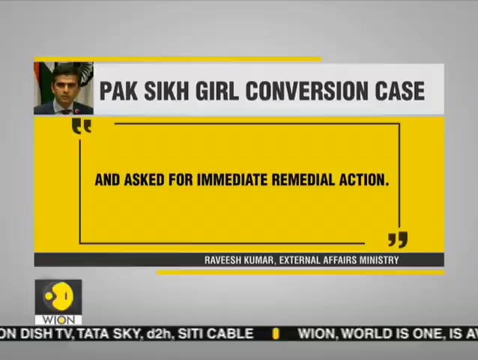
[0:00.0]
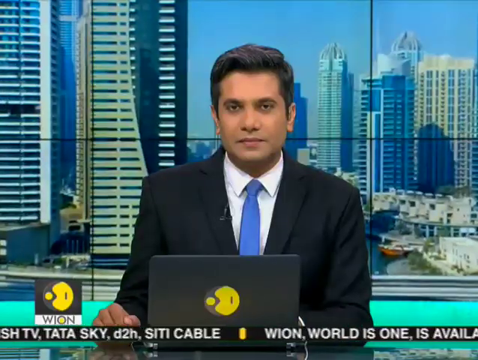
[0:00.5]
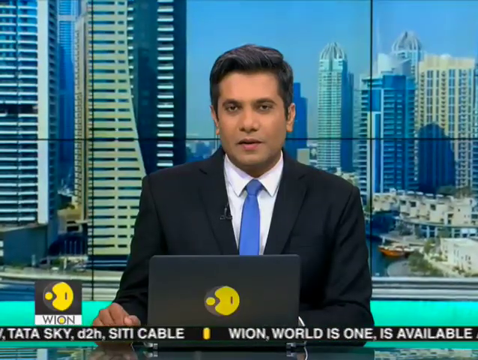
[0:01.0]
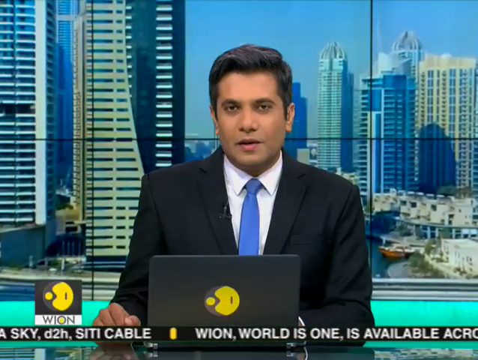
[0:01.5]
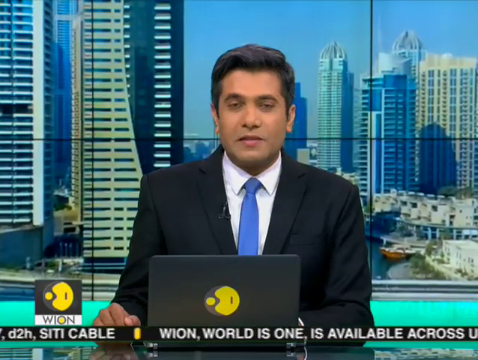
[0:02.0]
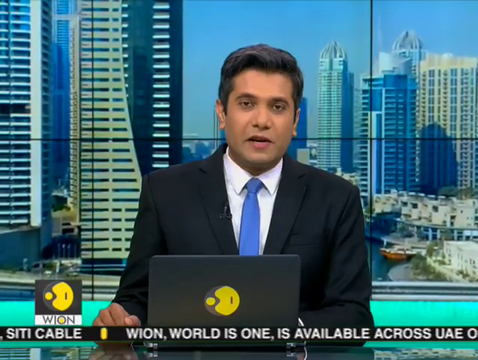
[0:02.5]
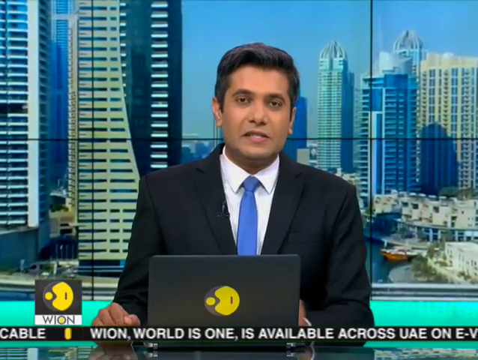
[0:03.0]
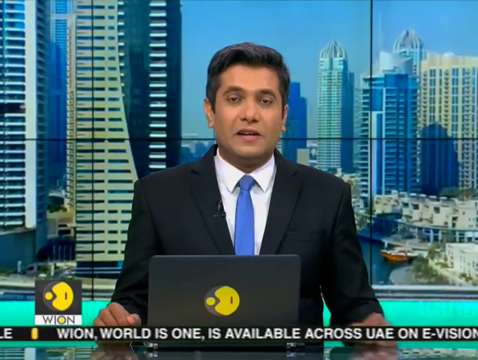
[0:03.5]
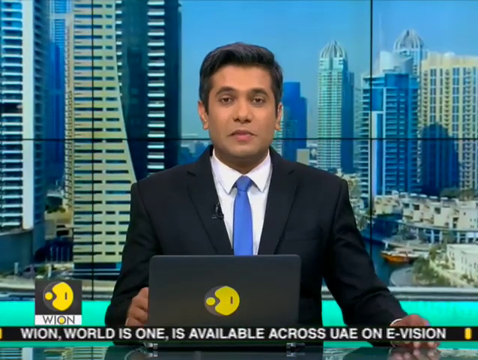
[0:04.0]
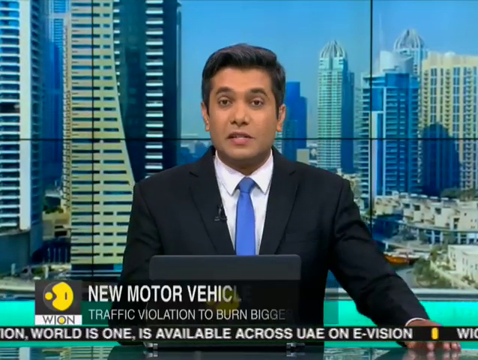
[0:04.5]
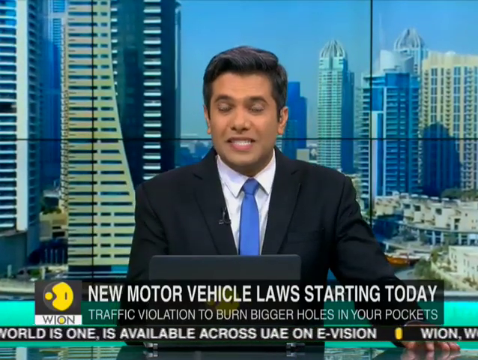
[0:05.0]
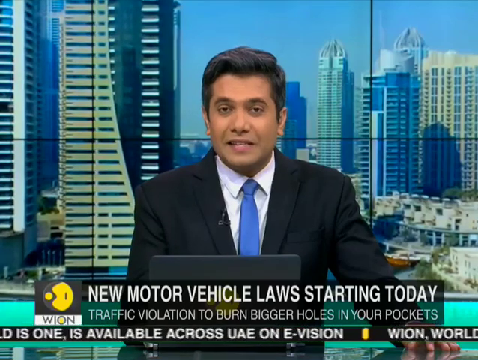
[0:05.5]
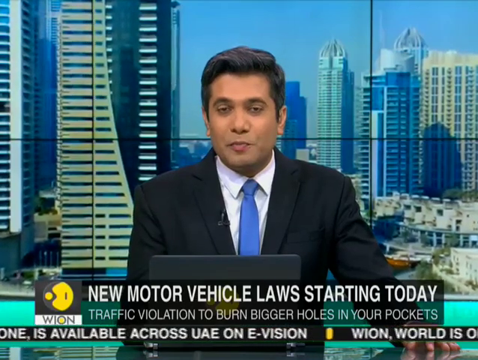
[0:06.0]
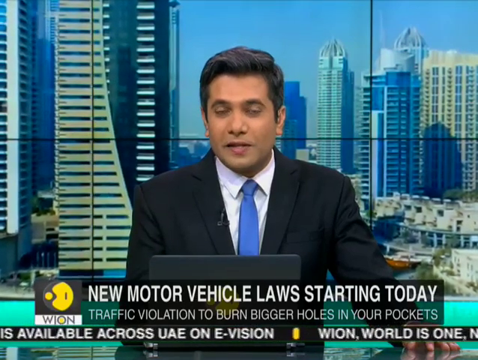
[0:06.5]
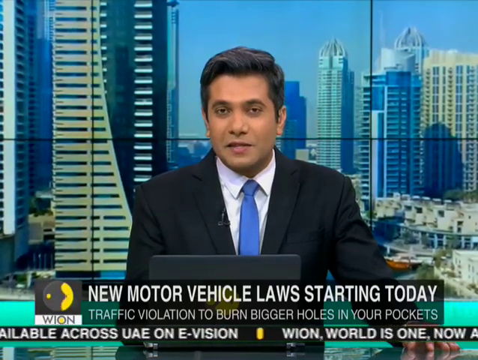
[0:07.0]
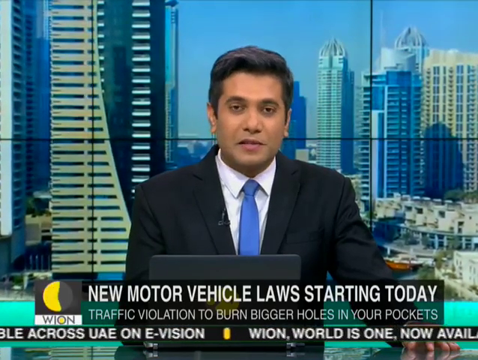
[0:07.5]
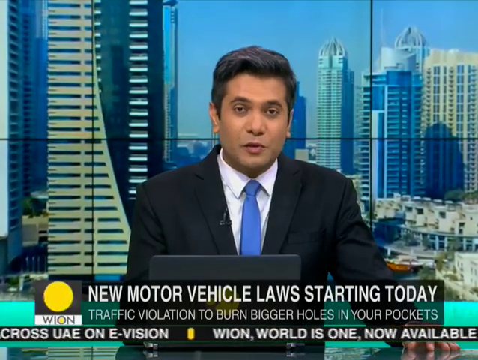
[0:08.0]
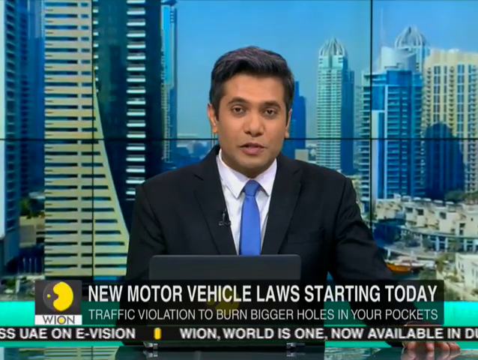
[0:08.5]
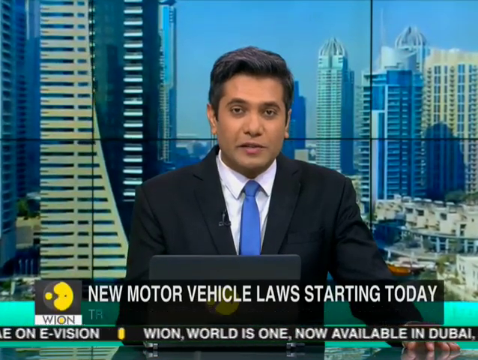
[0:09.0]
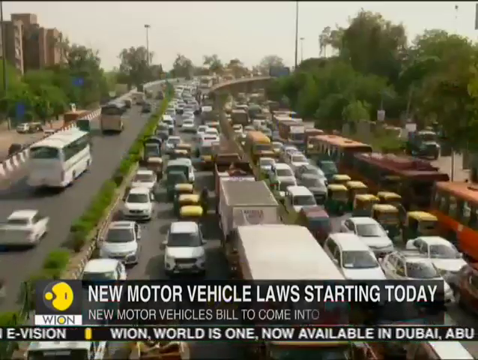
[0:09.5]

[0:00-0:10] A male news anchor sits at a desk with a laptop and speaks directly to the camera. Behind him, a large screen shows a city with skyscrapers, and a WeOn News Channel logo is visible at the bottom left of the screen. He wears a black suit, a white shirt and a blue tie, and his hands rest on the table. A lower-third graphic appears at the bottom of the screen with the headline "New Motor Vehicle Laws Starting Today" and the sub-headline "Traffic Violation to Burn Bigger Holes in Your Pockets." The anchor keeps speaking as he looks at the camera. The scene then changes to a wide aerial shot of a busy multi-lane highway filled with various vehicles, including cars, trucks and buses. A page with writing on a yellow poster pops up.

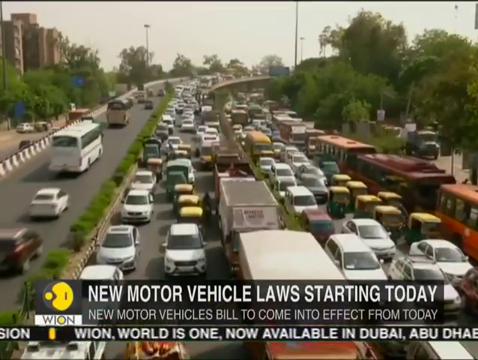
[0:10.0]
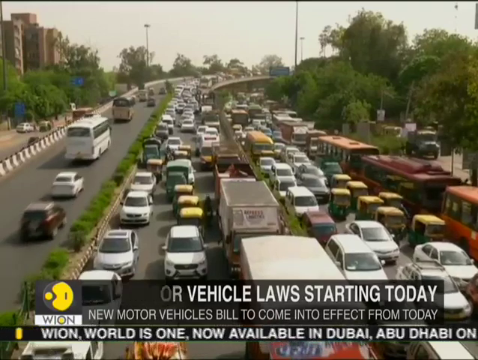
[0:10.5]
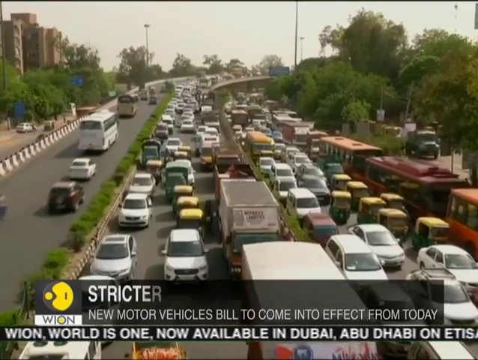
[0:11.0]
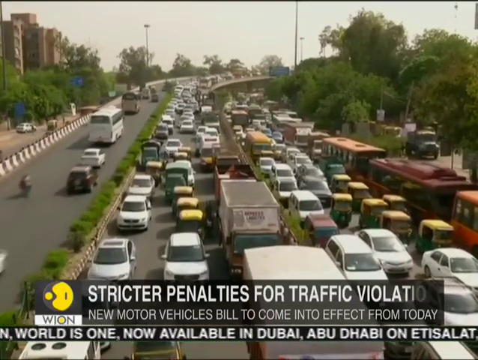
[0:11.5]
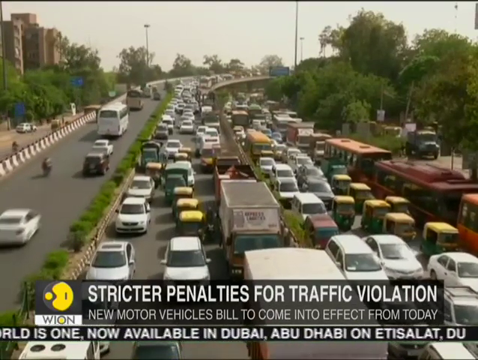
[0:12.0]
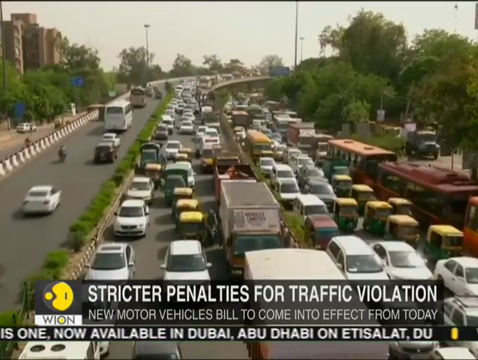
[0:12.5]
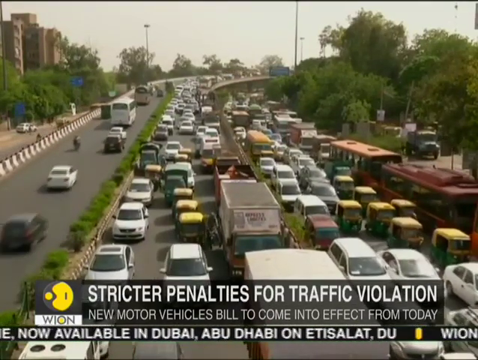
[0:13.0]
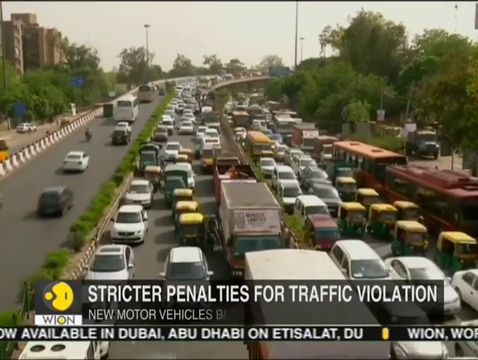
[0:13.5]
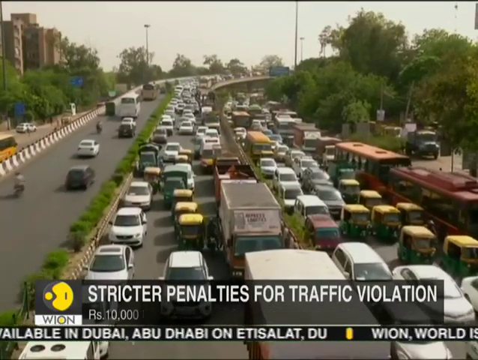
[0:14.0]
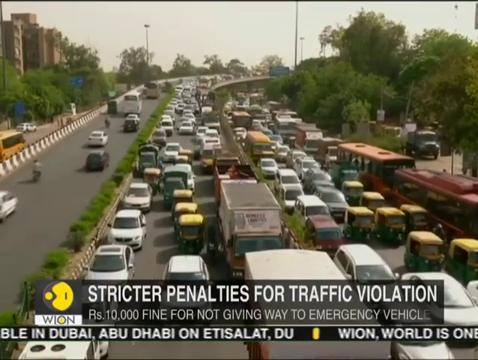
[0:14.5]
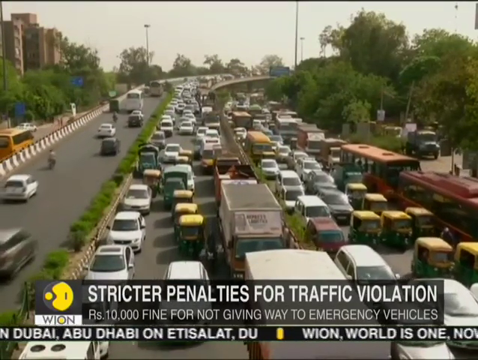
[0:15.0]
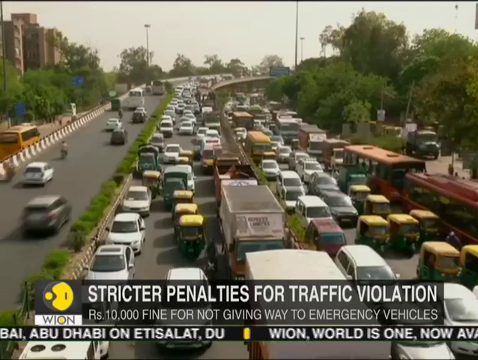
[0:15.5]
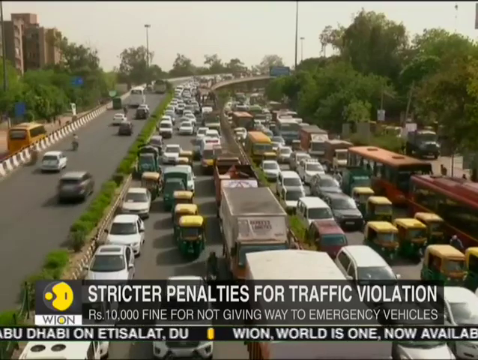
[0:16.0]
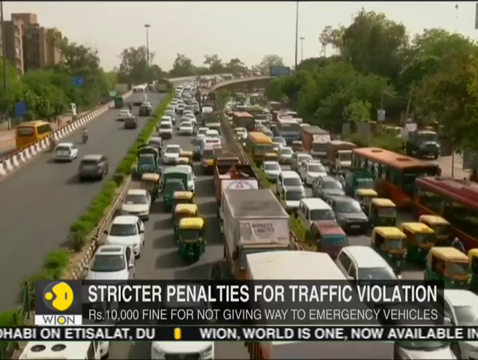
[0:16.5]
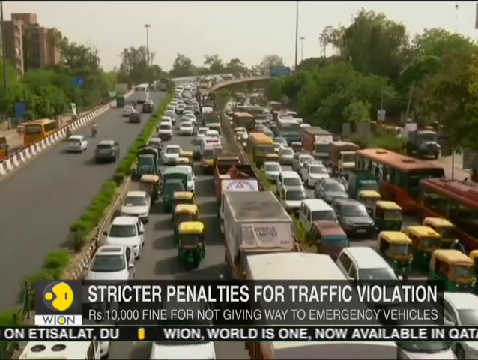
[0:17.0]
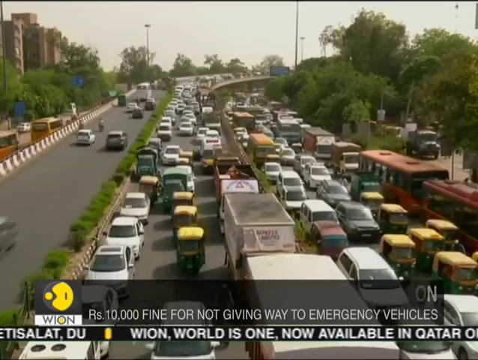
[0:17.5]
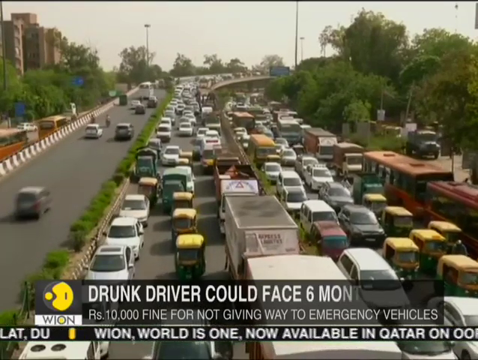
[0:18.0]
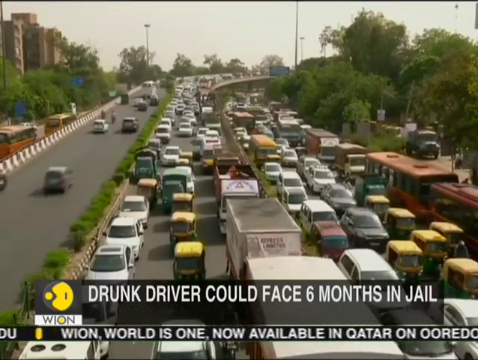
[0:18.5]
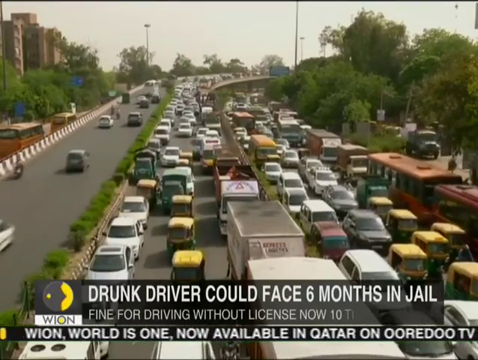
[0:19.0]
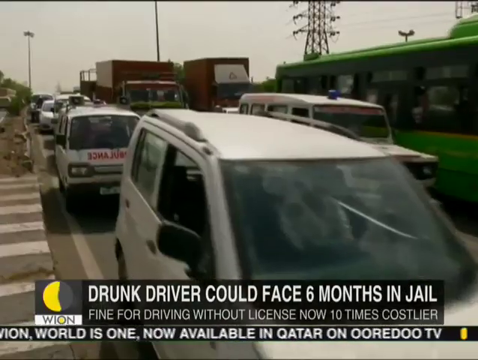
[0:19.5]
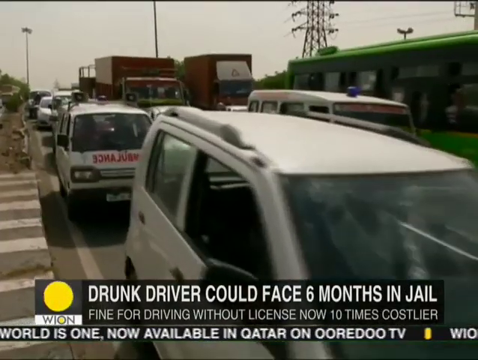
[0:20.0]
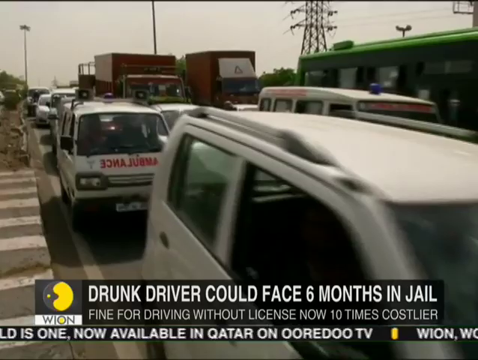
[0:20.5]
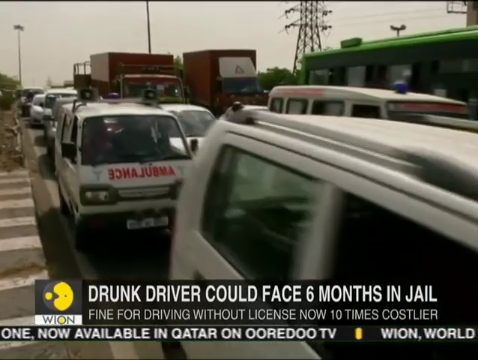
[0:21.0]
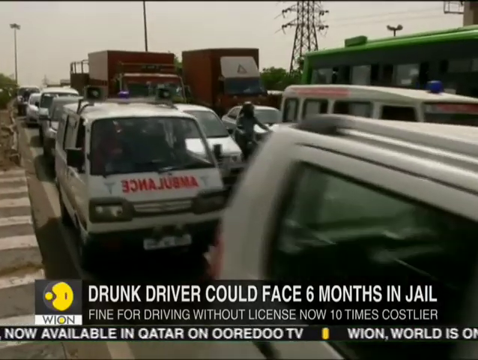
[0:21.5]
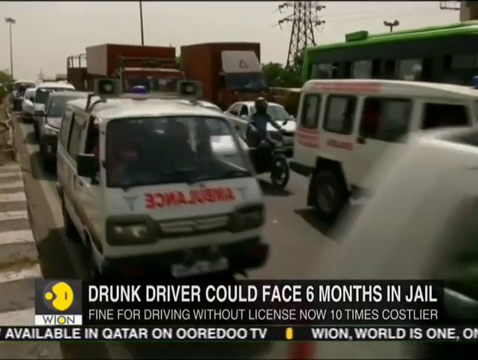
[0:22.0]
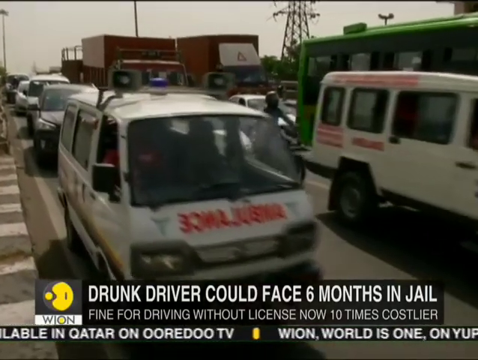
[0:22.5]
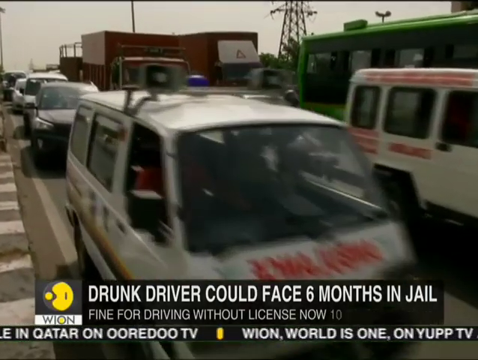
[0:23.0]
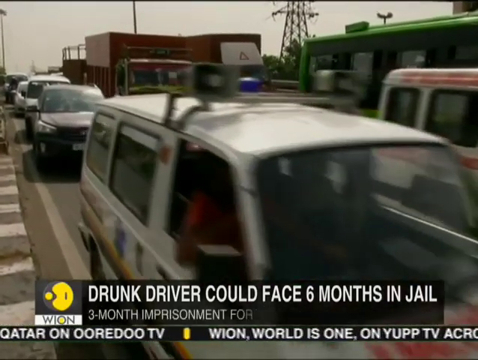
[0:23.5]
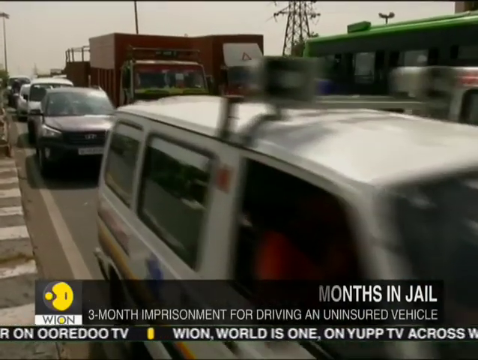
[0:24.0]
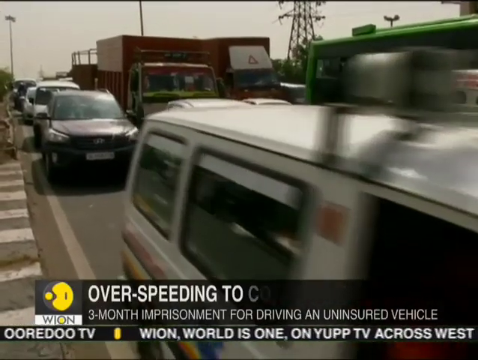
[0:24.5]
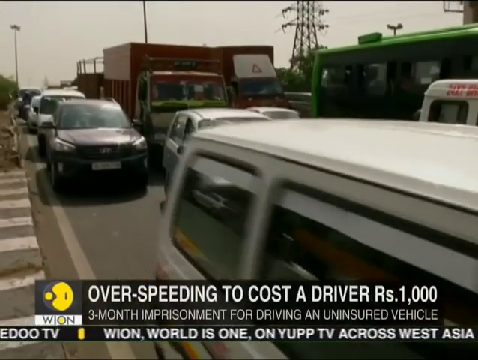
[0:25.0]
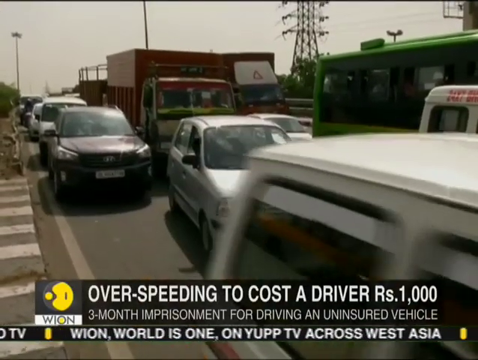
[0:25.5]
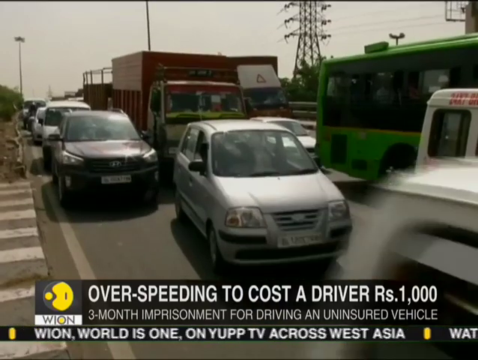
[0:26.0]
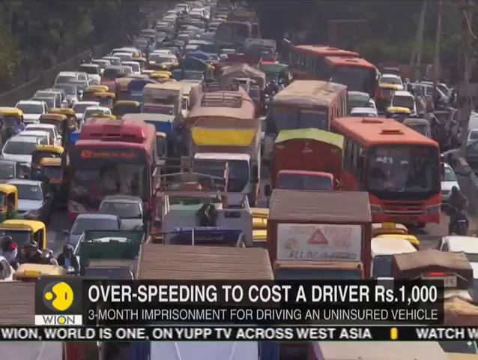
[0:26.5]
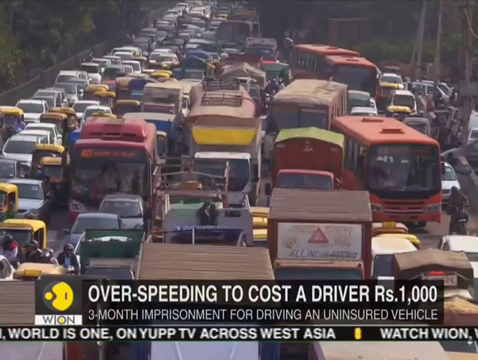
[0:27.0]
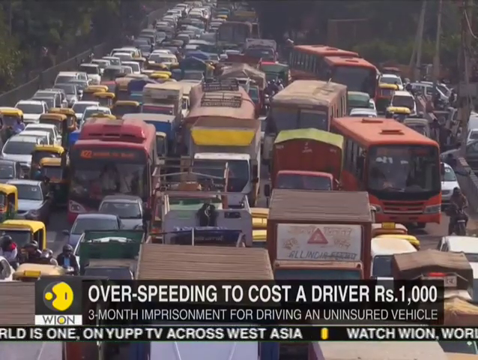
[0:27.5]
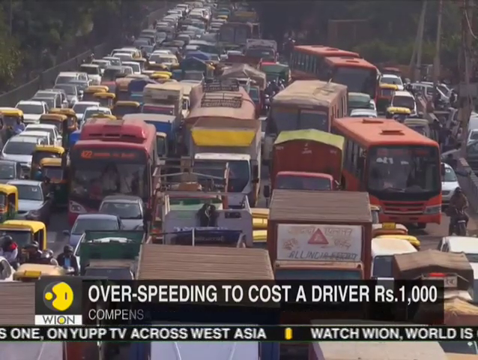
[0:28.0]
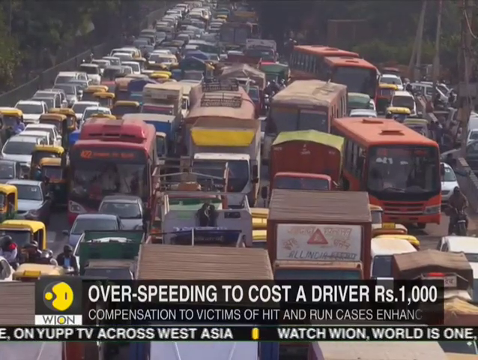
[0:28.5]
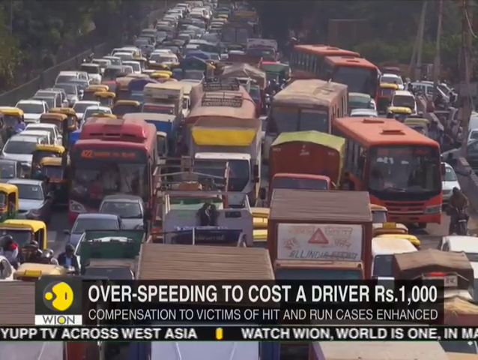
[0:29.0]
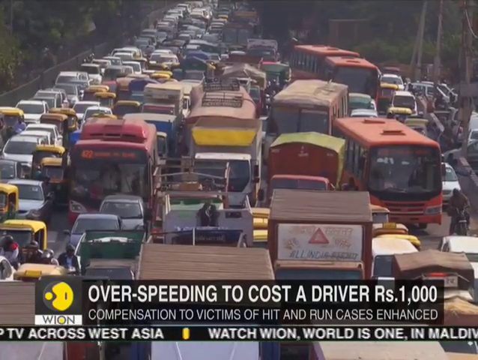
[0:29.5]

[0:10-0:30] A high-angle aerial view shows a wide multi-lane highway with a high volume of traffic flowing in both directions, with trees on both the right and left sides. The sky is foggy, and tower lights and erected light poles are visible. On-screen text mentions "penalties for traffic violation," there is lettering along the bottom, and text also reads "drunk driver could face six months in jail." Cars pass in a narrow lane. A white and red ambulance appears, along with a small commuter omnibus. An illuminated electricity transmitter is taller than the rest of the buildings shown, and on the right there is a brown building with a white poster. The shot ends on traffic in the street, with all the cars standing still and not moving.